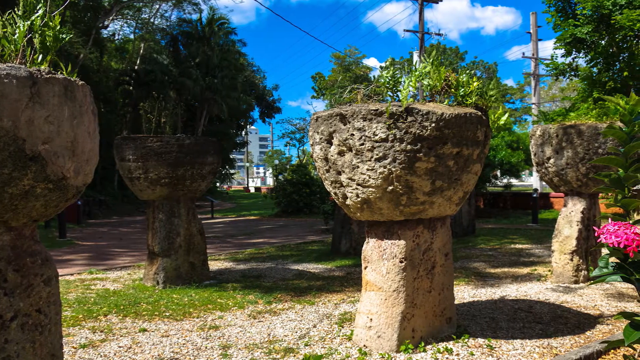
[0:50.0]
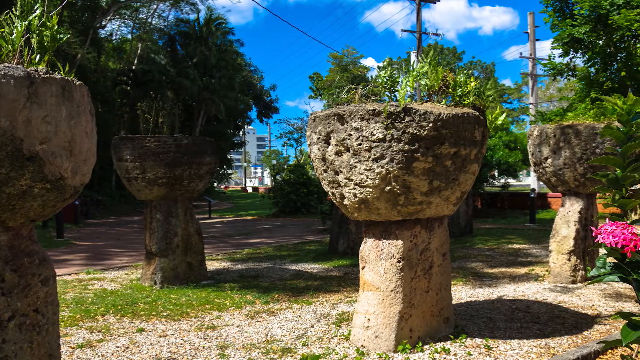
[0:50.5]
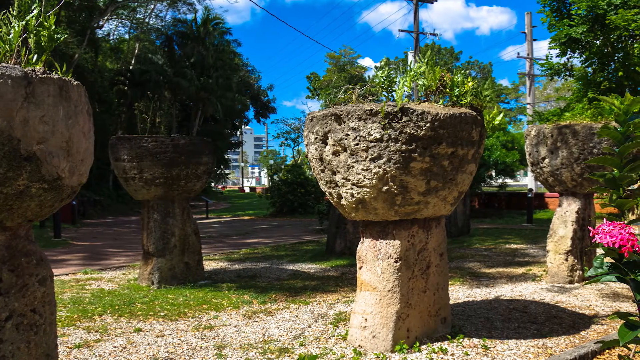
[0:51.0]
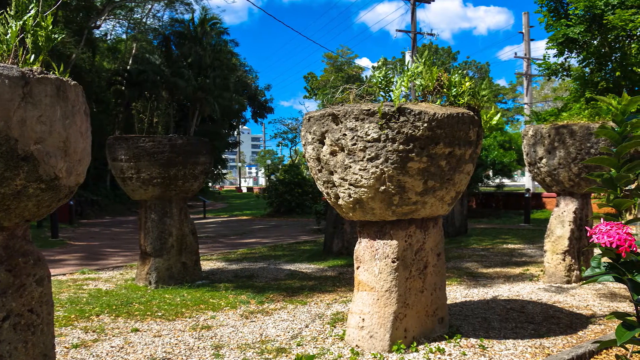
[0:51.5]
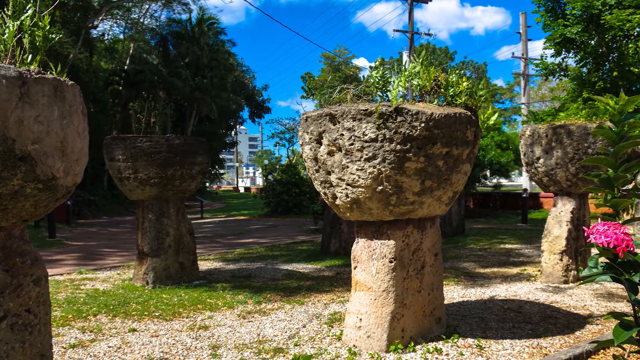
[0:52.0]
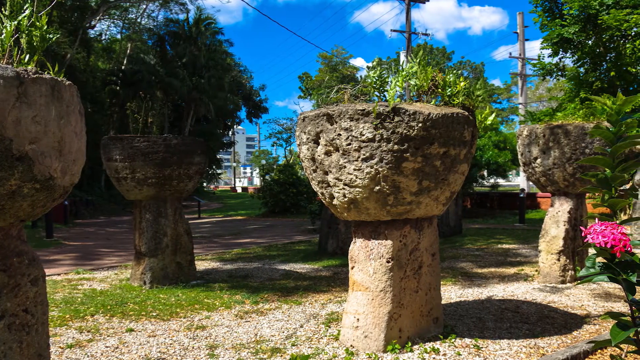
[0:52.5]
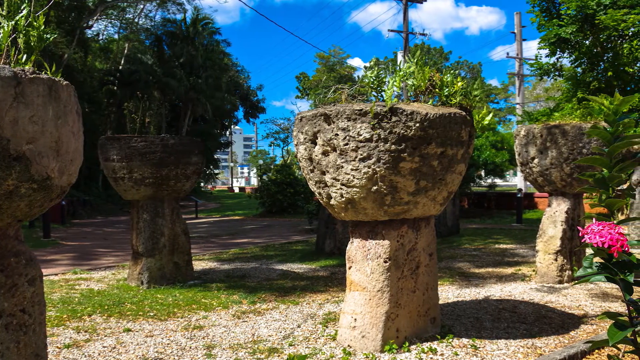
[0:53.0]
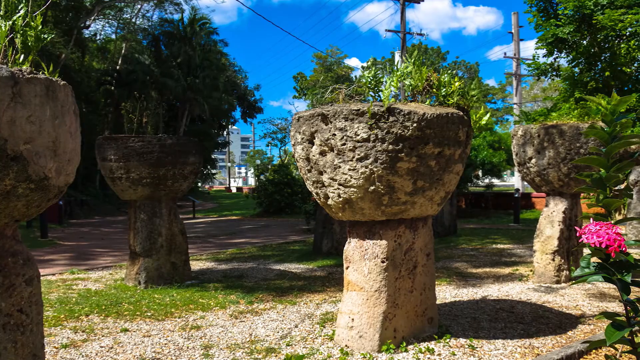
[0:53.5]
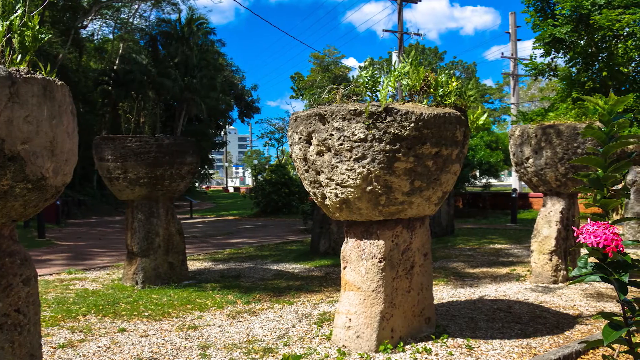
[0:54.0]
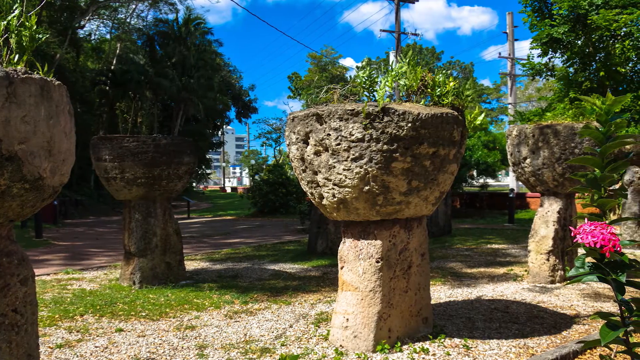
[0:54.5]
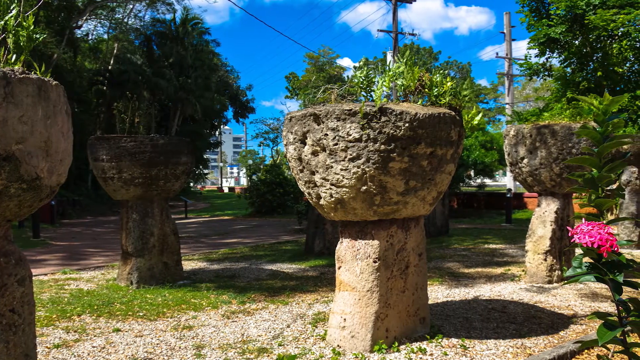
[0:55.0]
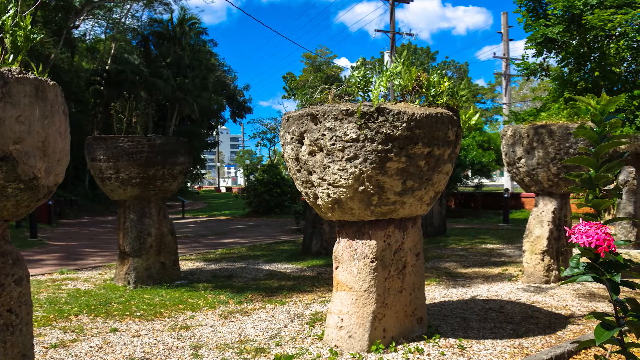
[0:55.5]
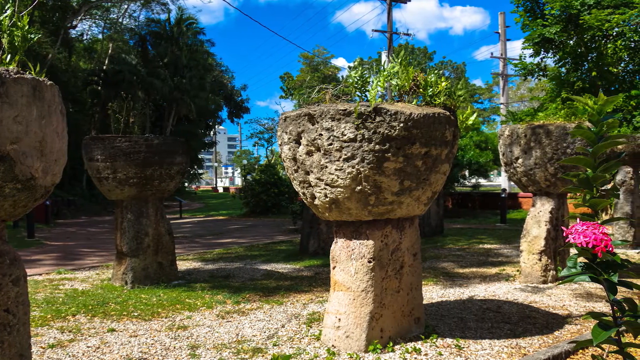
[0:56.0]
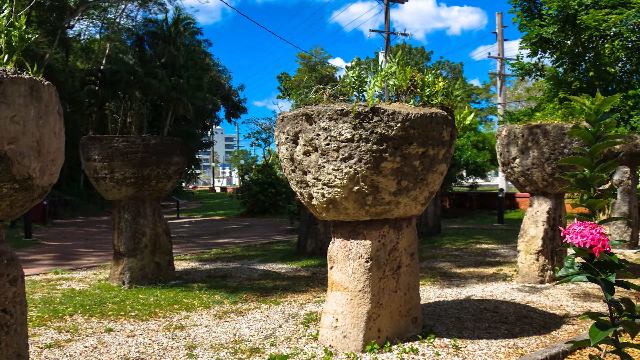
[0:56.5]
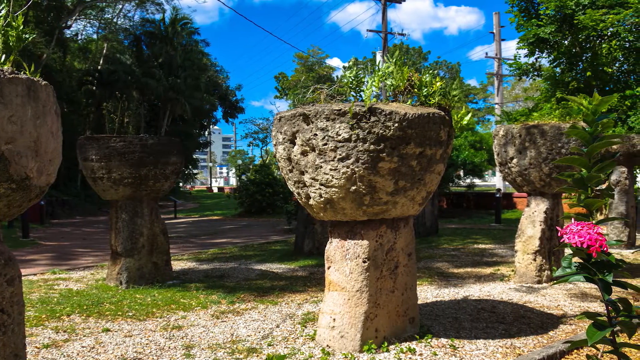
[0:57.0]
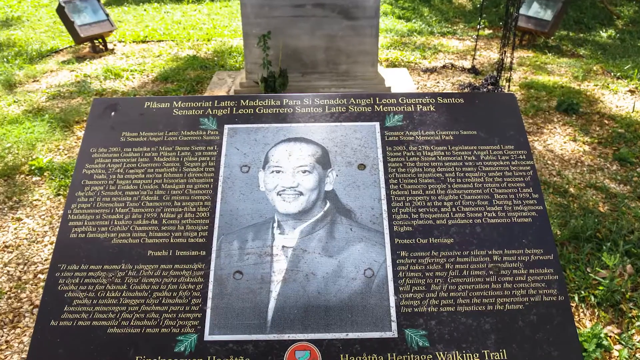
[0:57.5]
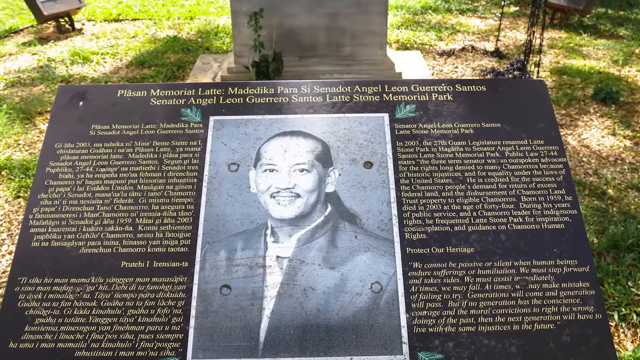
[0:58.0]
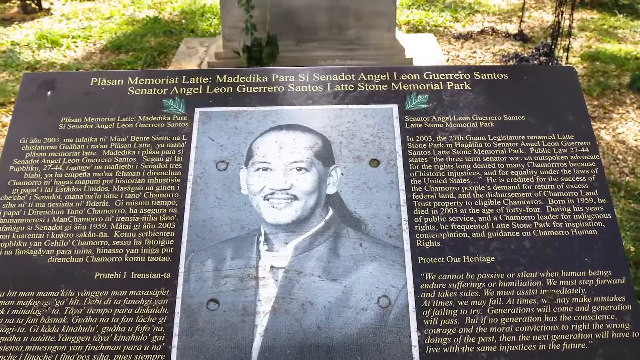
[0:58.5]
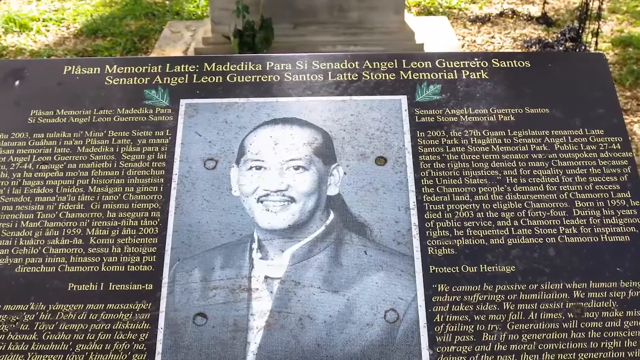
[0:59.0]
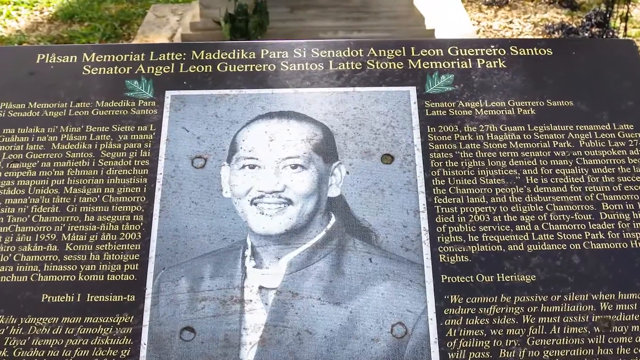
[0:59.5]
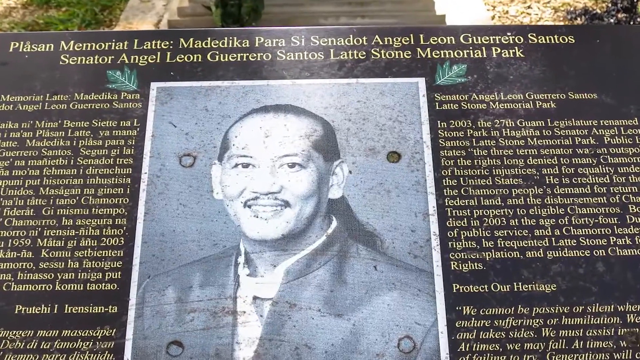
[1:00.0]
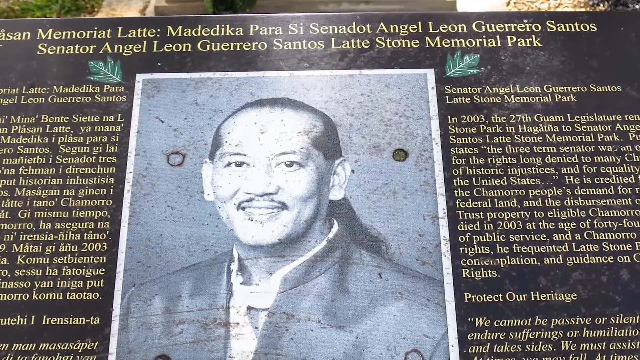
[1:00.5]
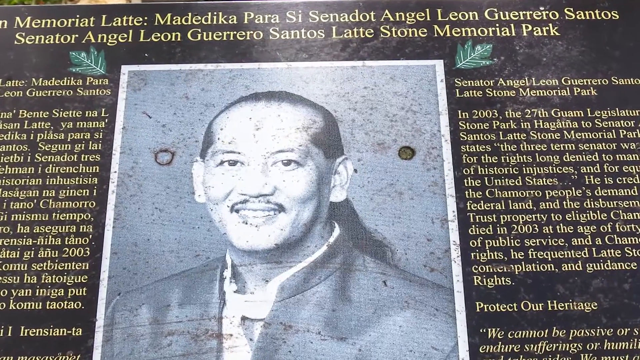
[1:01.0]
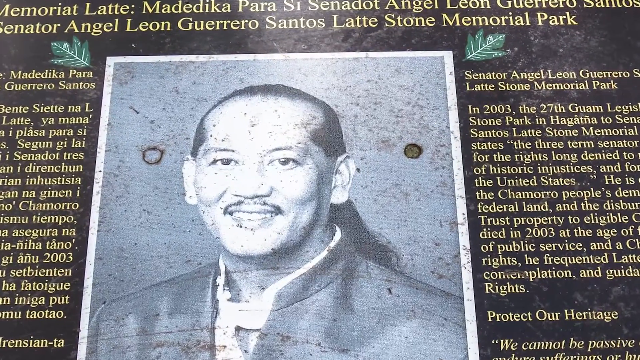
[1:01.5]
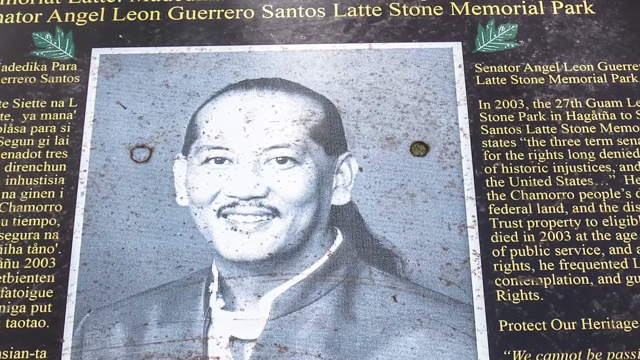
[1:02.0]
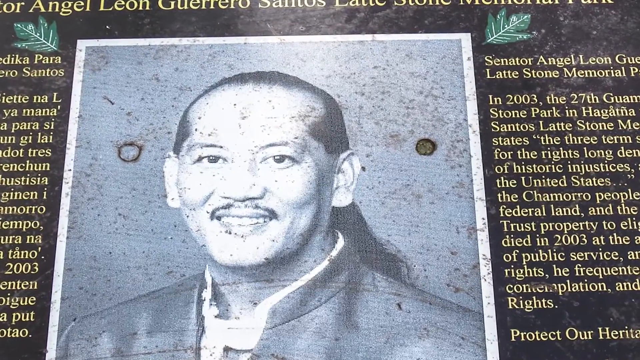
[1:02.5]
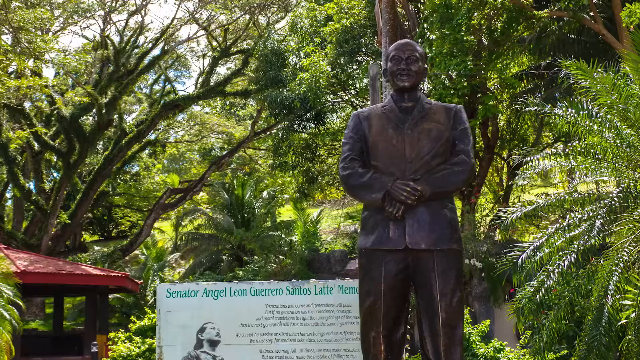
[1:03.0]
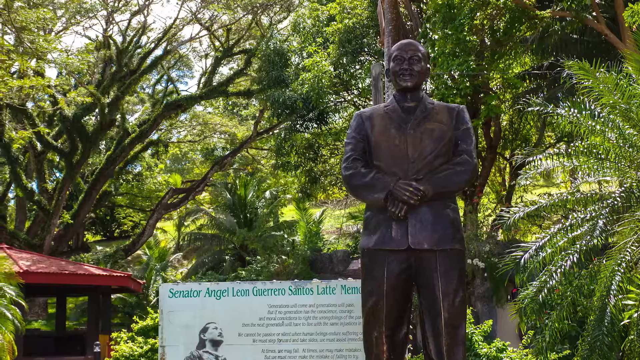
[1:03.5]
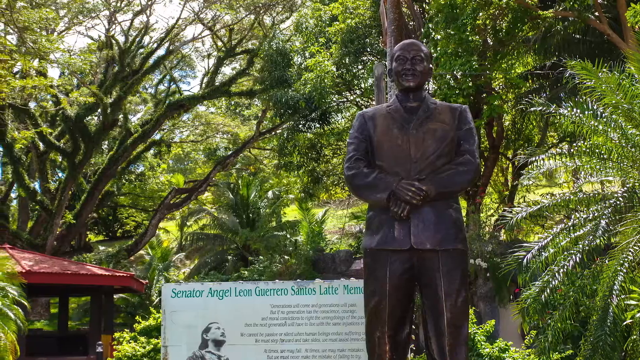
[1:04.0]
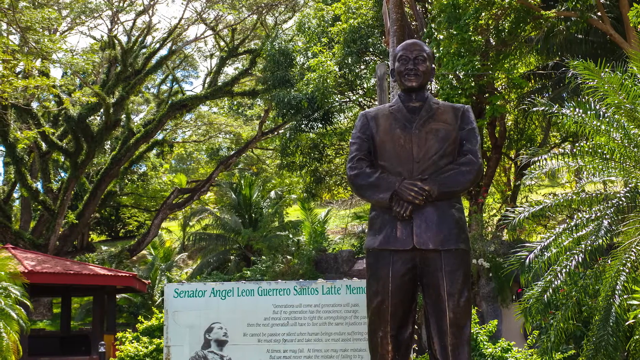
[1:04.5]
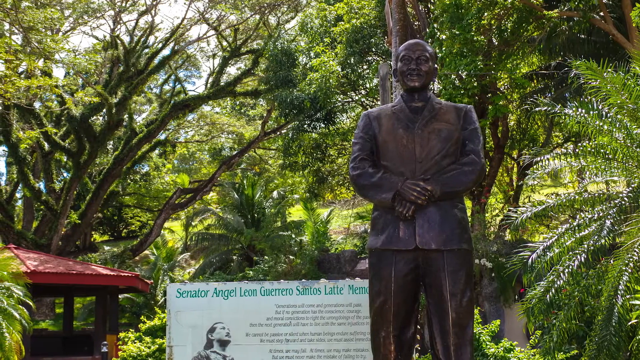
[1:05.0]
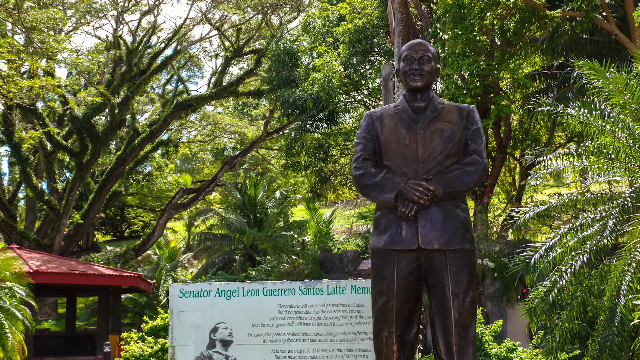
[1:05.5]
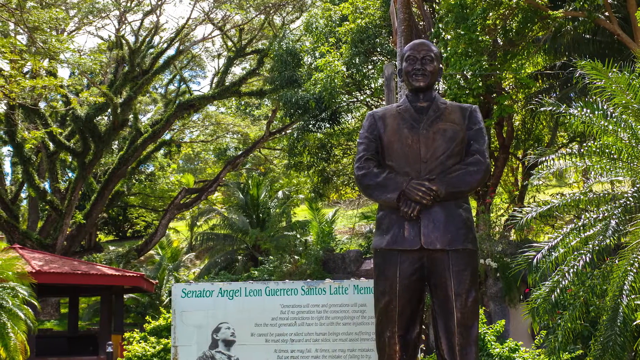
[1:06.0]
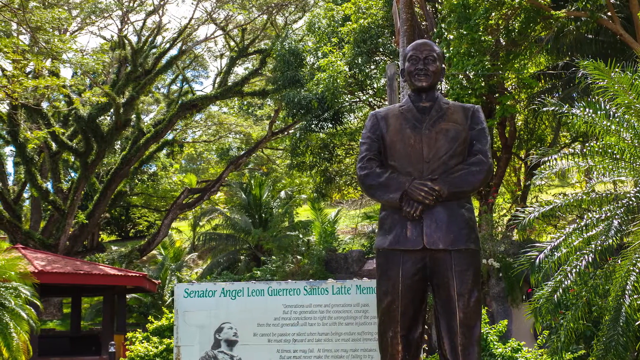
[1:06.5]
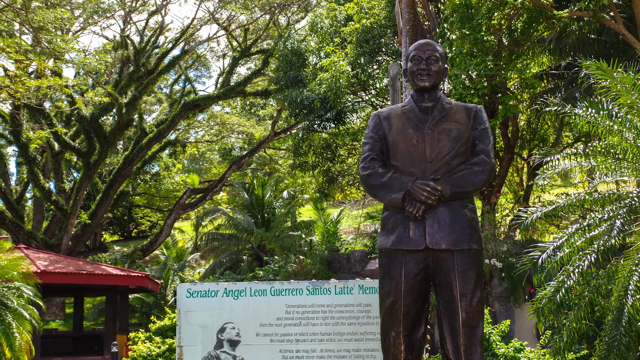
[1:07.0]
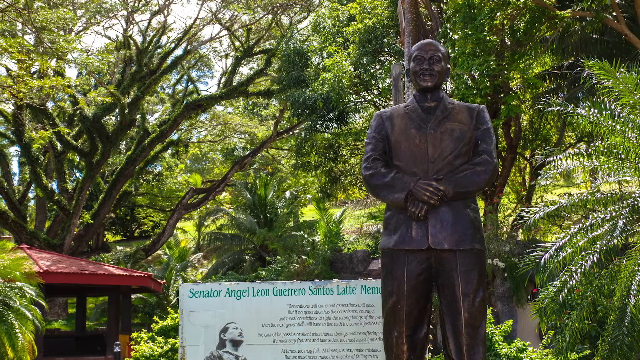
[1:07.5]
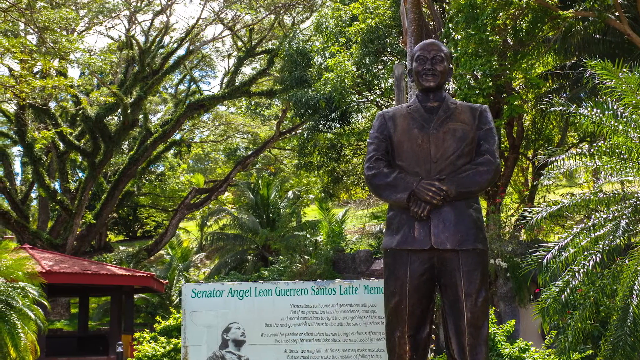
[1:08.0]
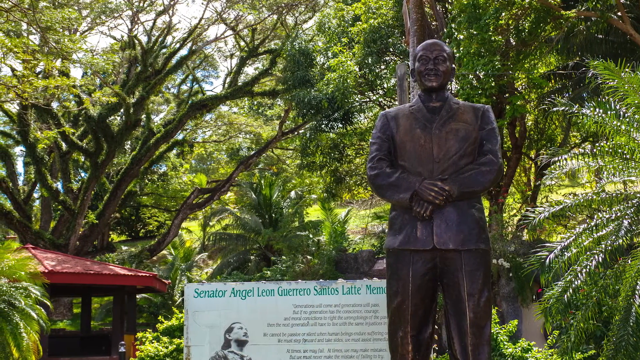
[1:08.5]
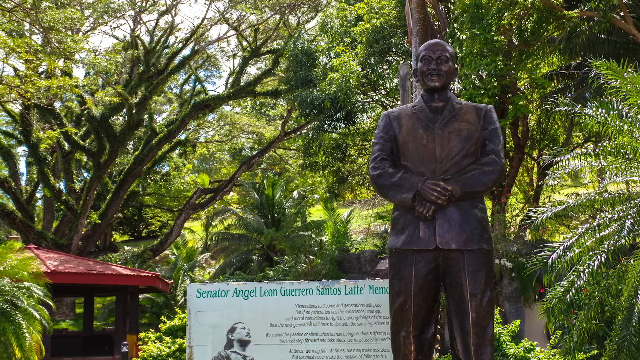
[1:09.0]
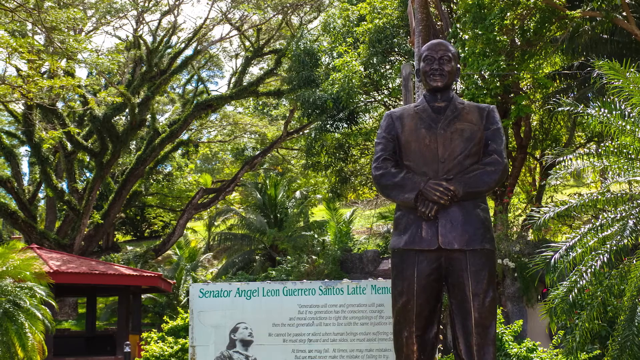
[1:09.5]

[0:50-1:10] The camera continues to pan right, showing a small path or paved area with rustic Japanese urns on either side. Four urns are visible, two in the foreground and two in the background. At the far right of the screen is a bunch of bright pink flowers with green leaves, and in the background a paved area or path leads to green trees and lawn, with urban buildings in the distance. The sky at the top of the screen is blue with a few white fluffy clouds, and tall green trees stand at the left and right of the screen, with some in the centre behind the urns. Next comes what looks like a memorial in the park, with a large black and white photo of a Japanese man in the middle. Gold lettering on a black background runs on either side of the photo, and text across the top identifies the person. The top line is in Spanish, and beneath it the text reads "Senator Angel Leon Guerrero Santos Latte Stone Memorial Park". The camera zooms in on this image so the black and white photo gradually fills the screen. Then there is a shot of a bronze statue of the same man, standing with his hands folded in front of him, his right hand holding the wrist of his left hand. The camera pans left, revealing a white sign with green lettering in the background that reads "Senator Angel Leon Guerrero Santos Latte", with the rest of the sign cut off. To the far left is a red-roofed pavilion, and in the background are many very tall trees with moss growing on their trunks.